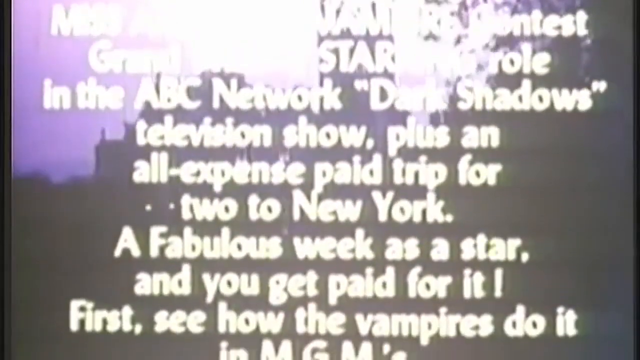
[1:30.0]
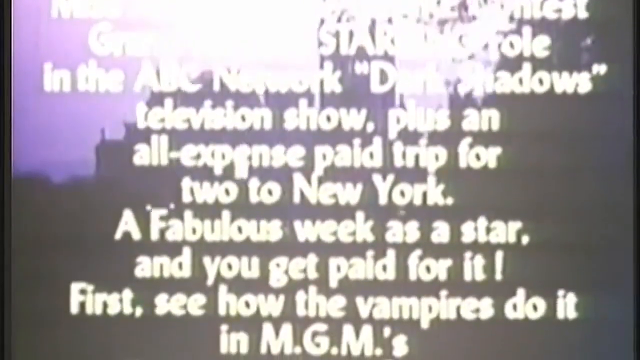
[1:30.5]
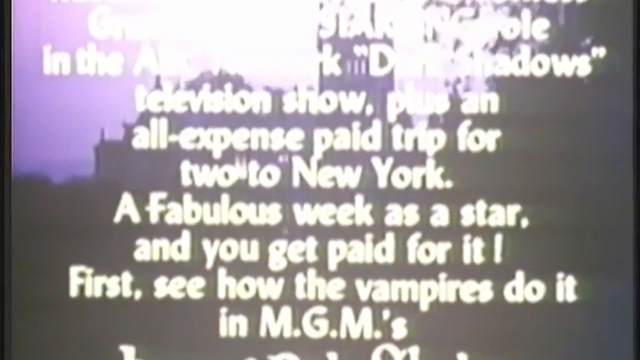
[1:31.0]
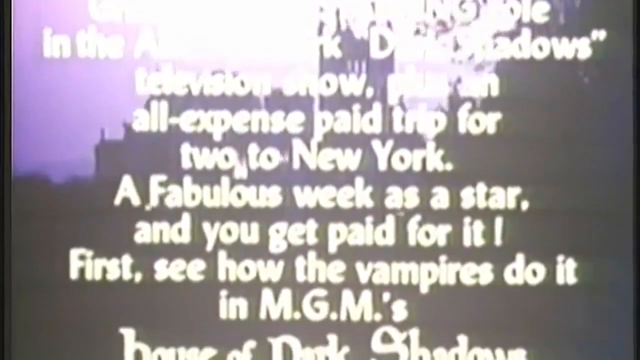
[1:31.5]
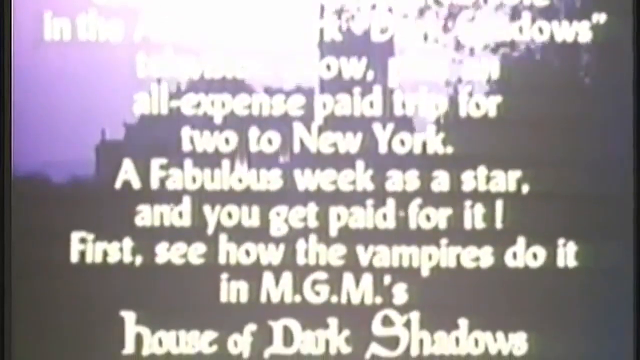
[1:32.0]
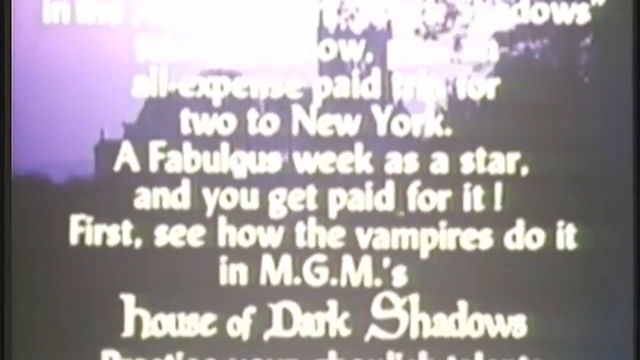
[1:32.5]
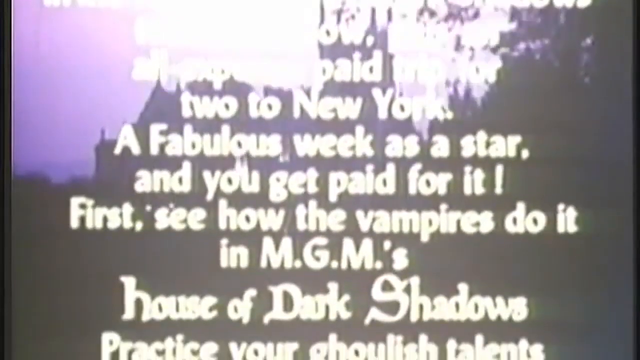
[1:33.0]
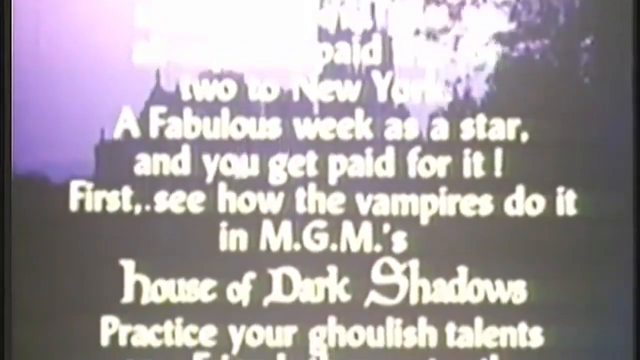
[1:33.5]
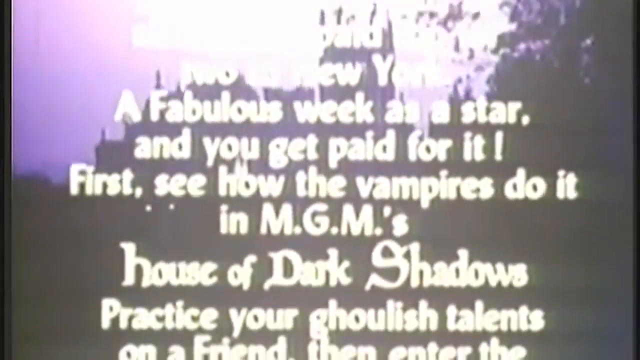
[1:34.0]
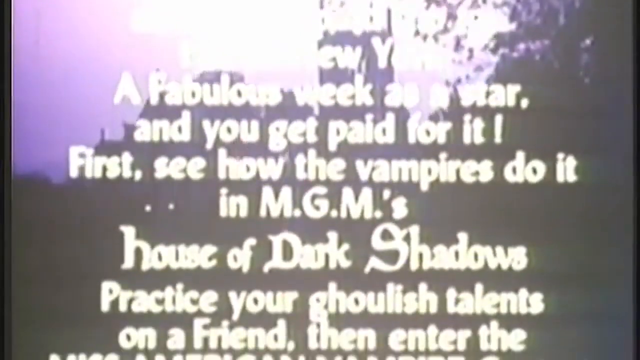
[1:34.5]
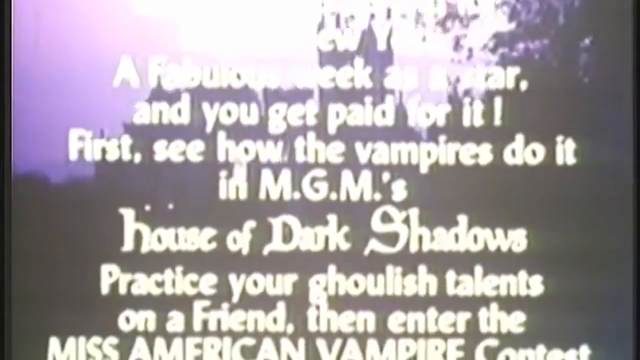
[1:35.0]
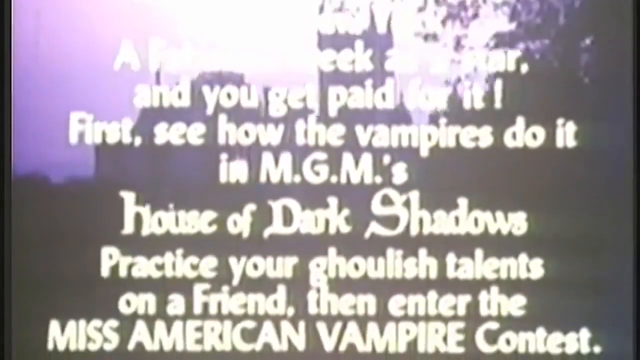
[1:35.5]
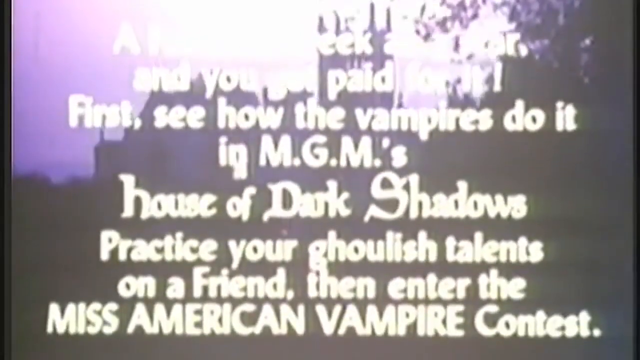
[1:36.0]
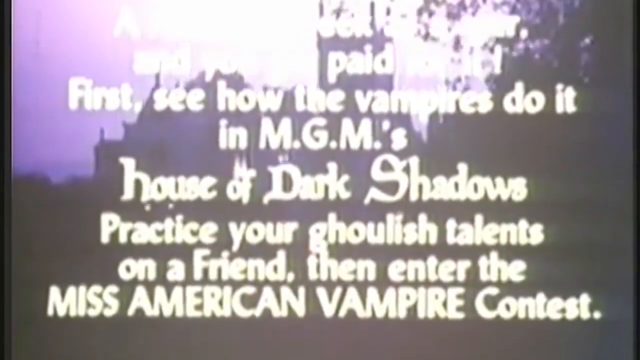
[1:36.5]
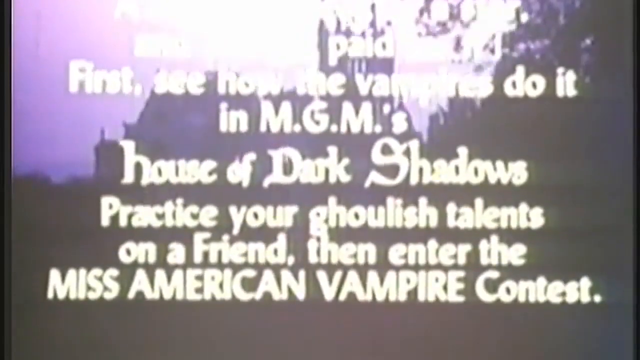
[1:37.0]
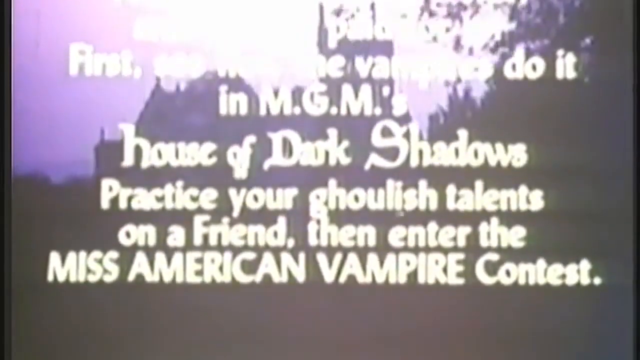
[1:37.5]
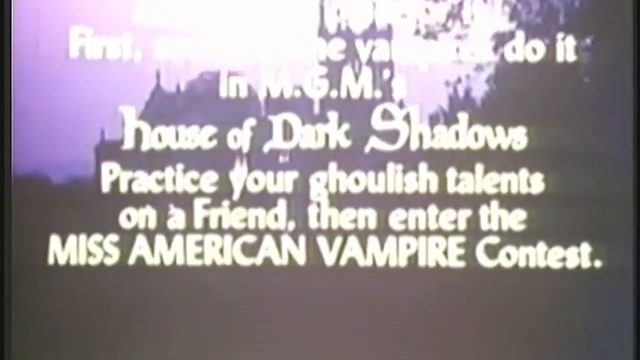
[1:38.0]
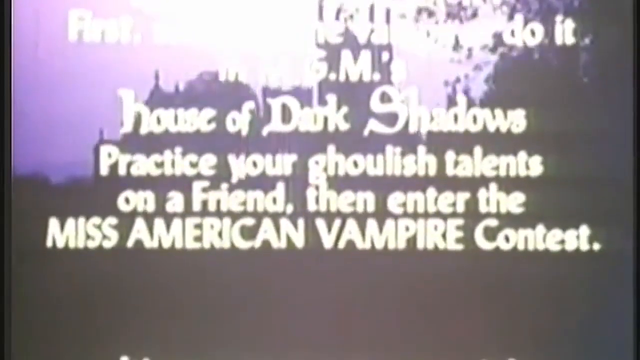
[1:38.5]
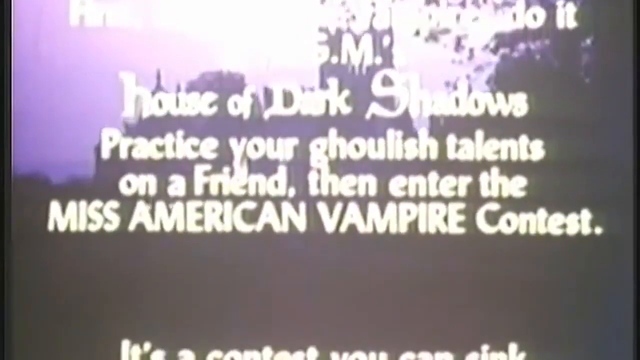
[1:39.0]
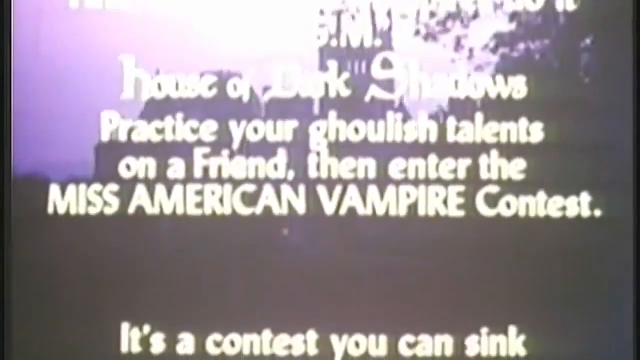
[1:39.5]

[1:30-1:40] More advertisement text reads "First, see how the vampires do it in MGM's House of Dark Shadows, practice your ghoulish talents on a friend, then enter the" contest.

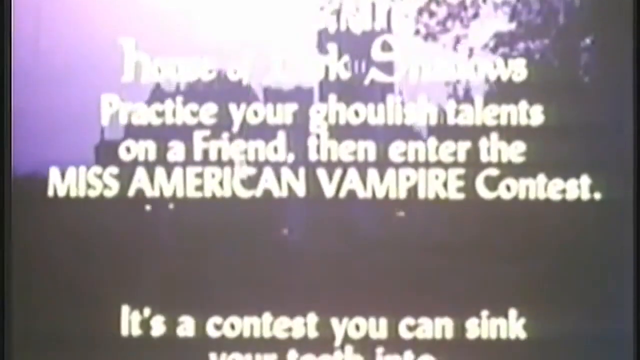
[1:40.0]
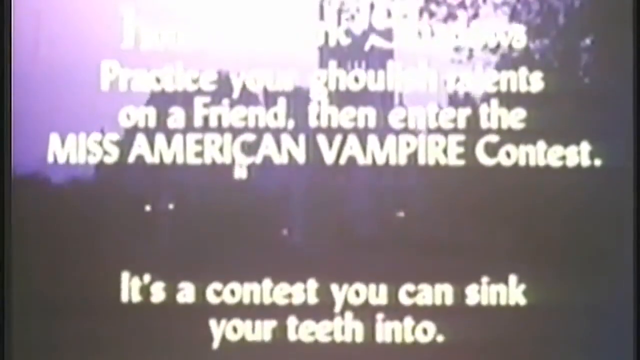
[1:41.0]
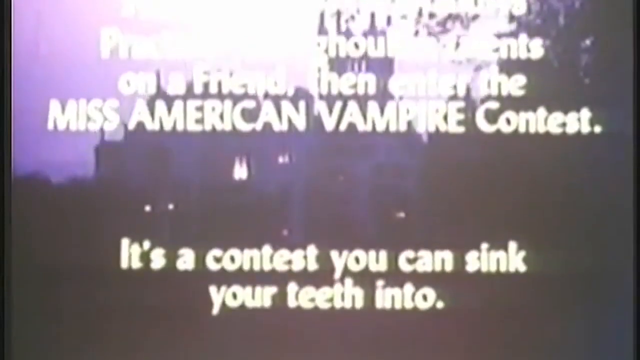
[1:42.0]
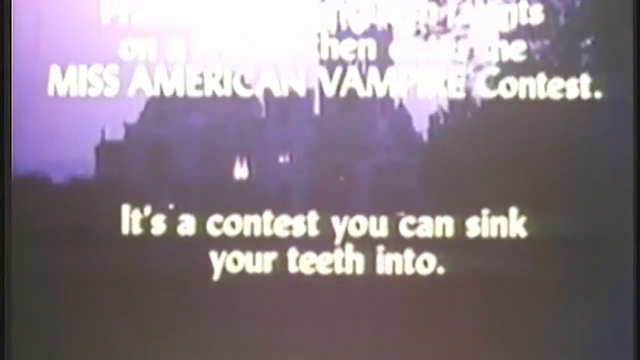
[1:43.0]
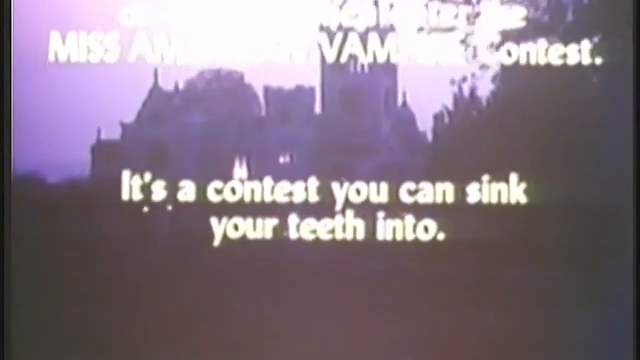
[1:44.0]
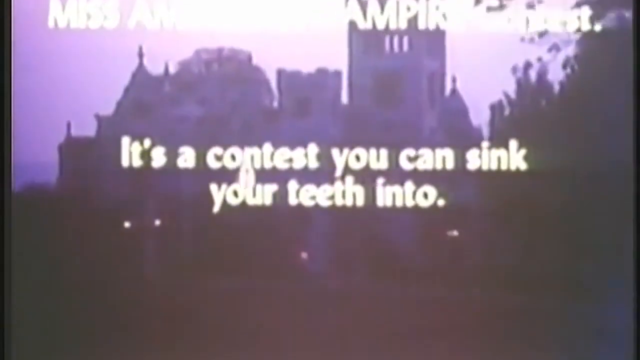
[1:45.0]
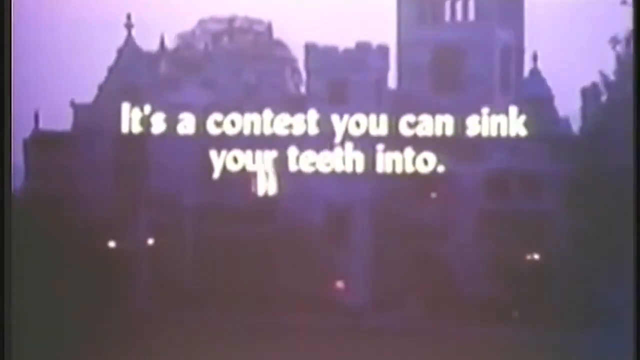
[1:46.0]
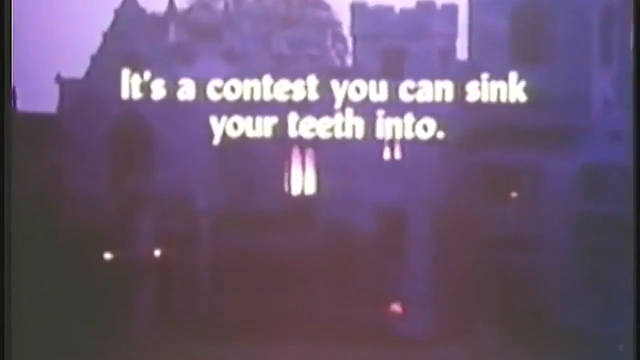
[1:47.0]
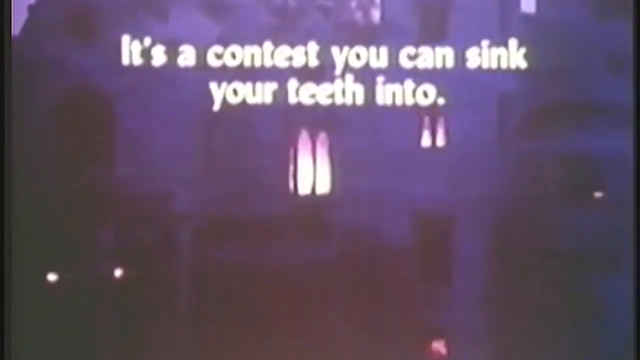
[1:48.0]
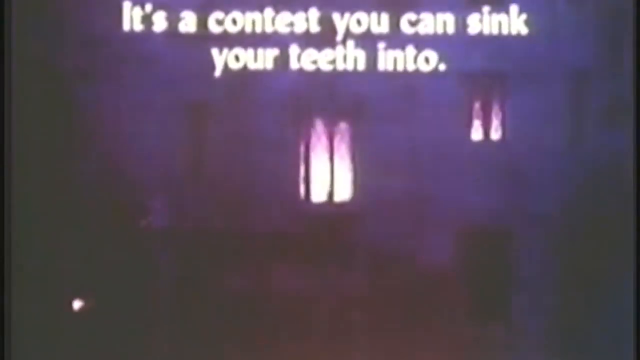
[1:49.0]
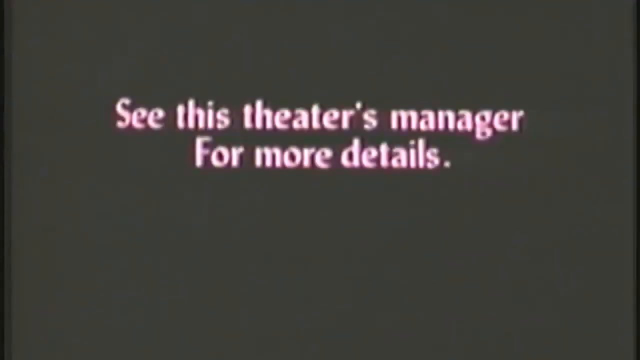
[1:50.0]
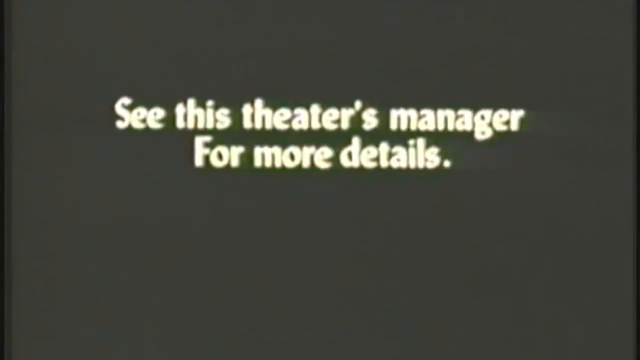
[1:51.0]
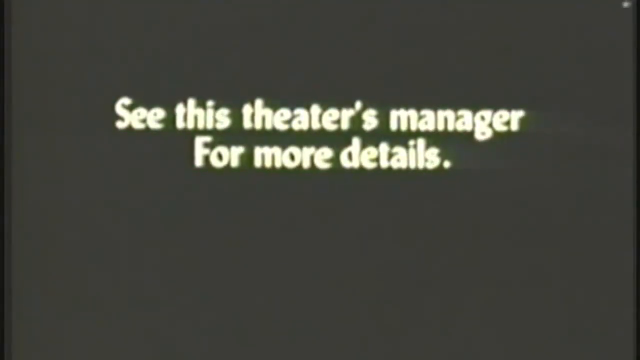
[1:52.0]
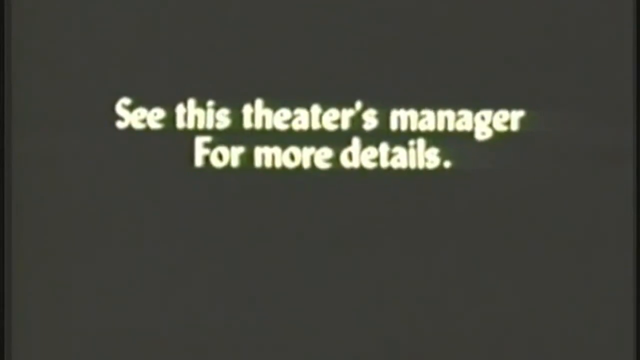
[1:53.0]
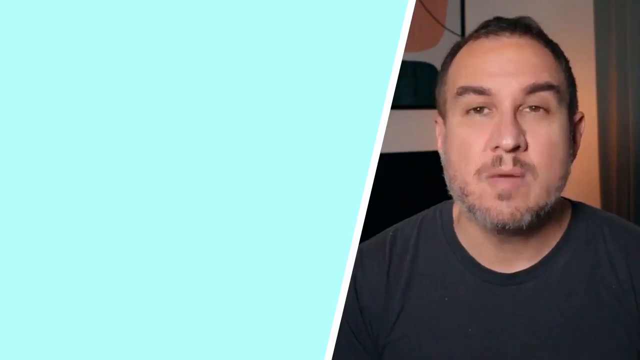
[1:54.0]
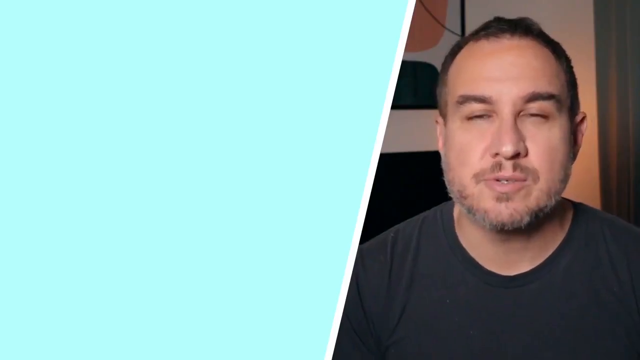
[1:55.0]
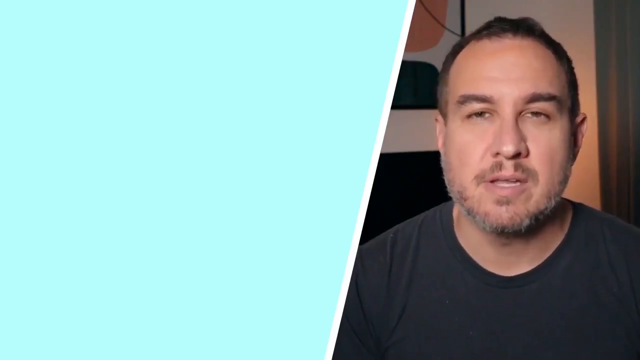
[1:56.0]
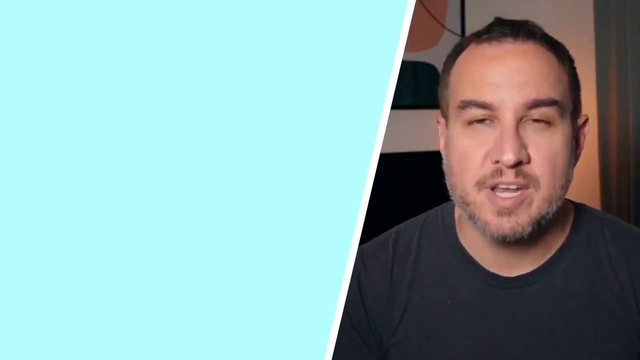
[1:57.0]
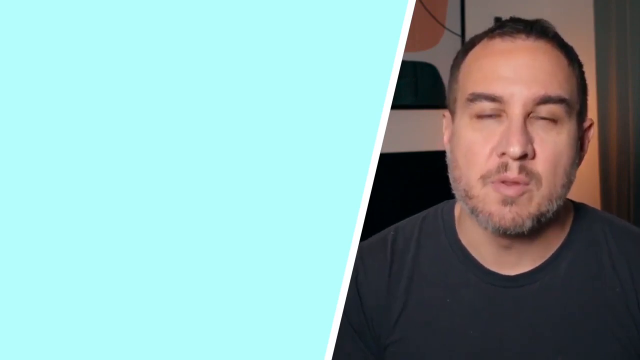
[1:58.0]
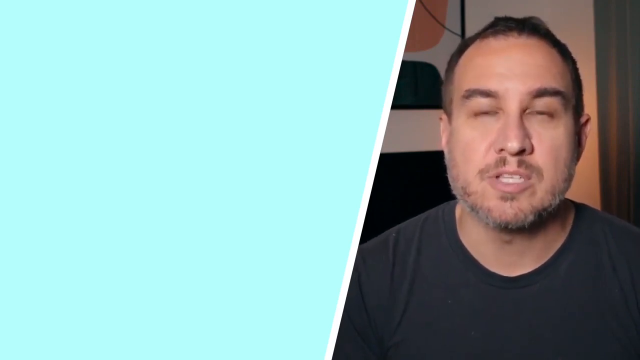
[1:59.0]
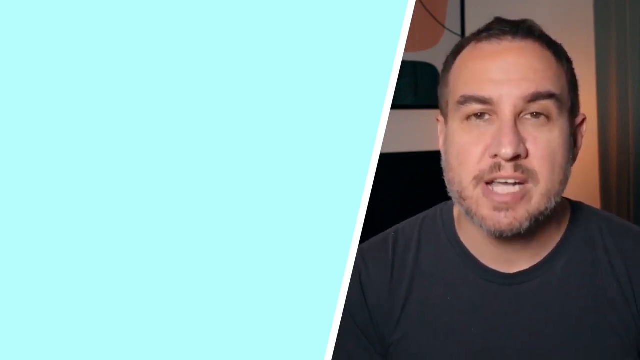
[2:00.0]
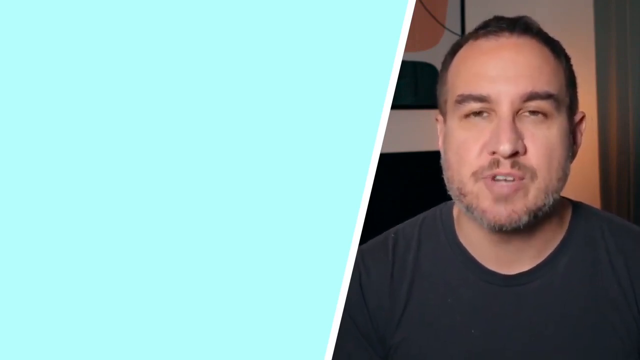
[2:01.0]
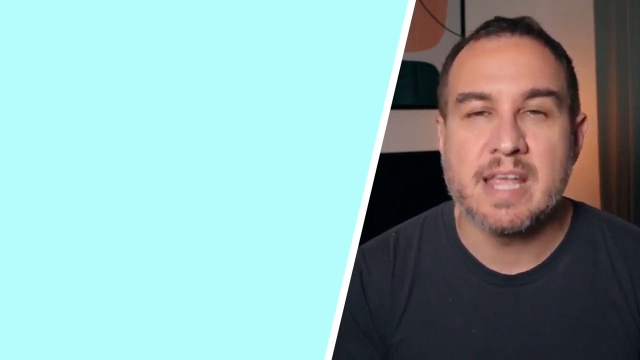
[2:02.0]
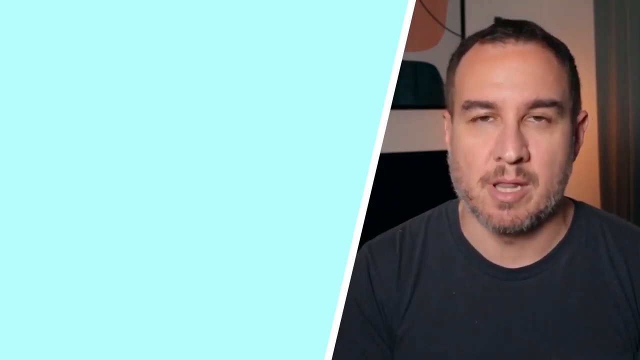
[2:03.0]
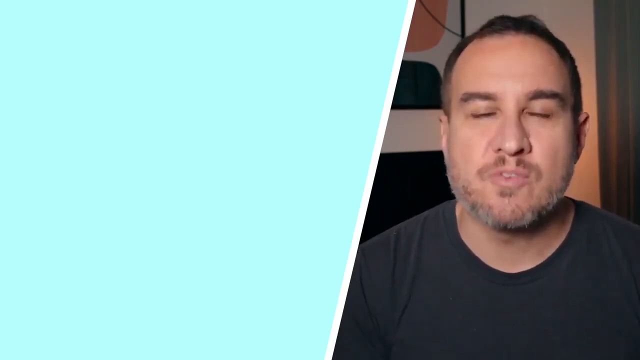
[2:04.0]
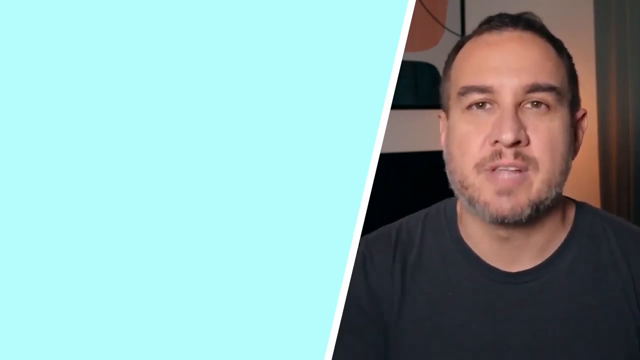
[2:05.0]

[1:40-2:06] Text reads "It's your contest you can sink your teeth into." Continuing the vampire theme, the view zooms in on a castle-like building. Text then reads "See this theater's manager for more details."